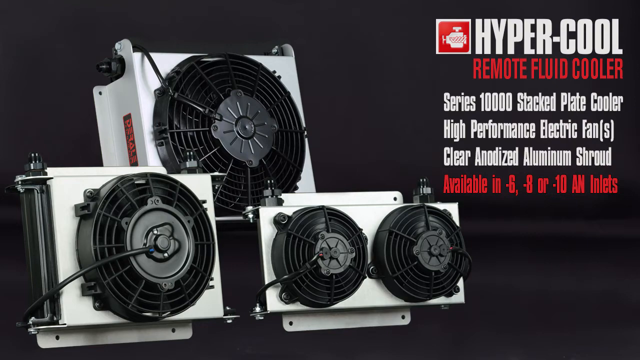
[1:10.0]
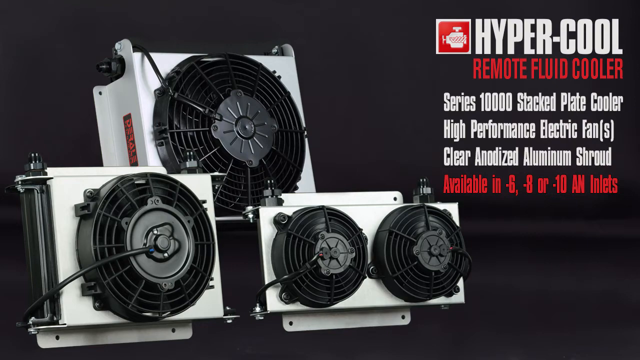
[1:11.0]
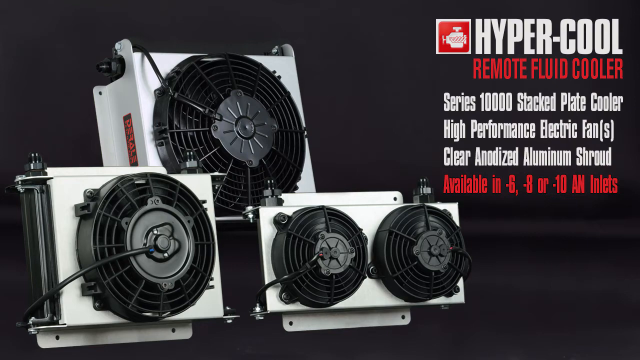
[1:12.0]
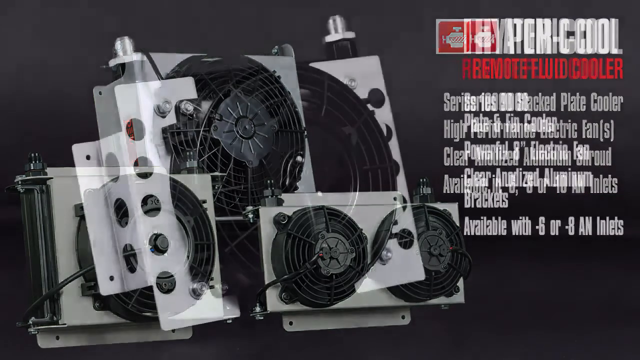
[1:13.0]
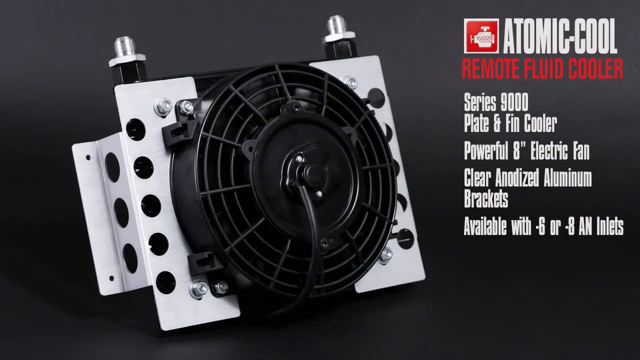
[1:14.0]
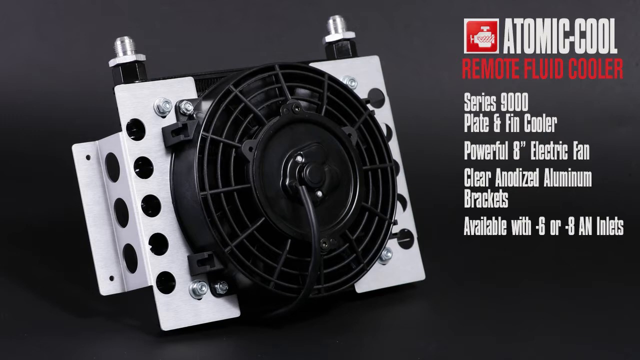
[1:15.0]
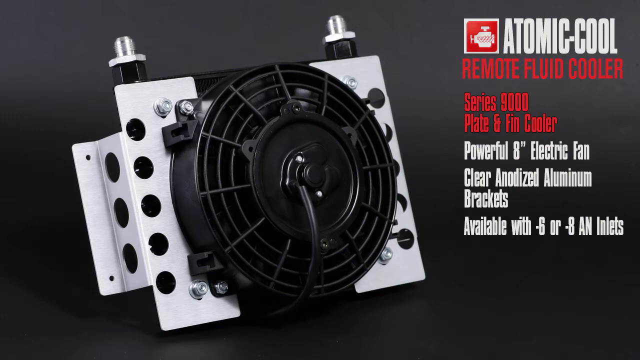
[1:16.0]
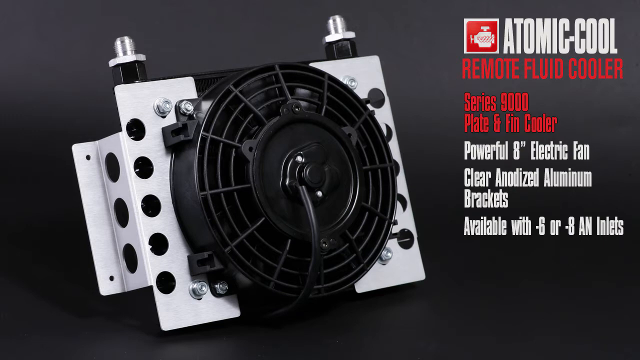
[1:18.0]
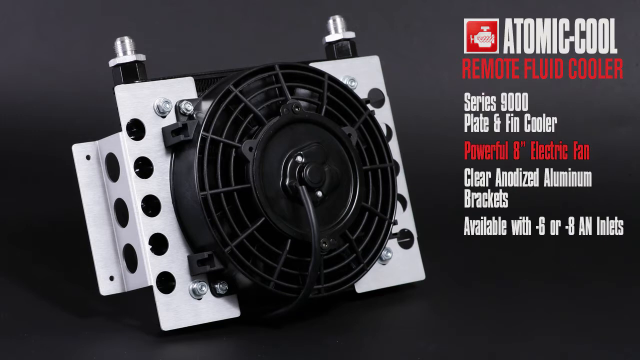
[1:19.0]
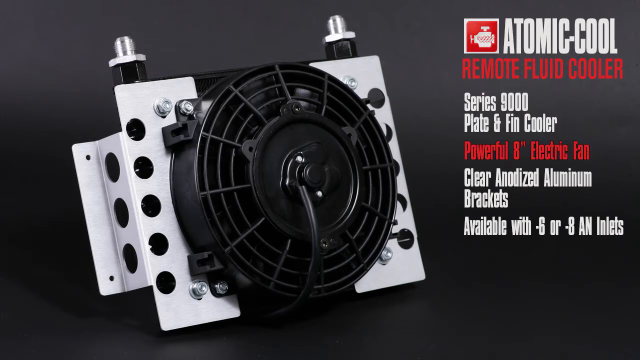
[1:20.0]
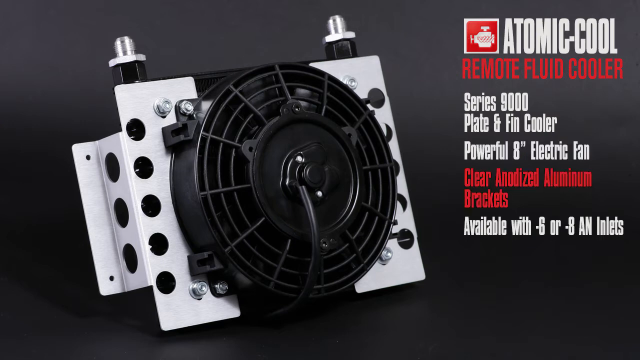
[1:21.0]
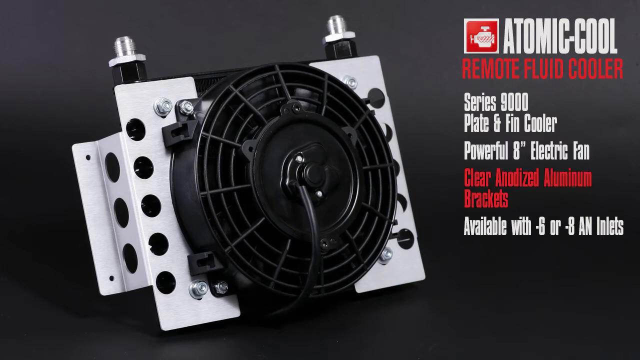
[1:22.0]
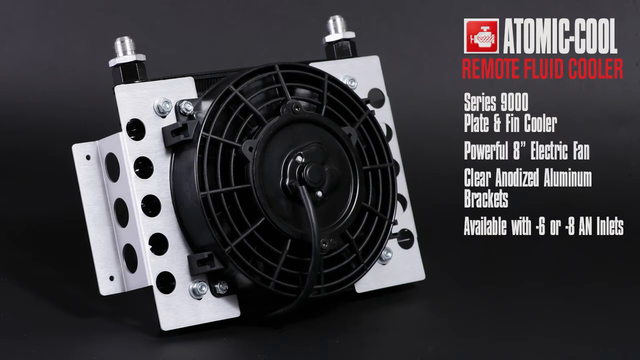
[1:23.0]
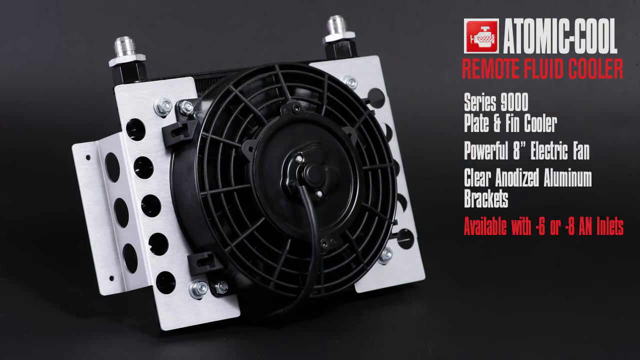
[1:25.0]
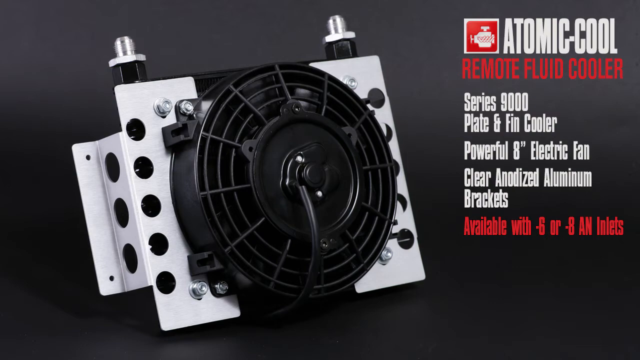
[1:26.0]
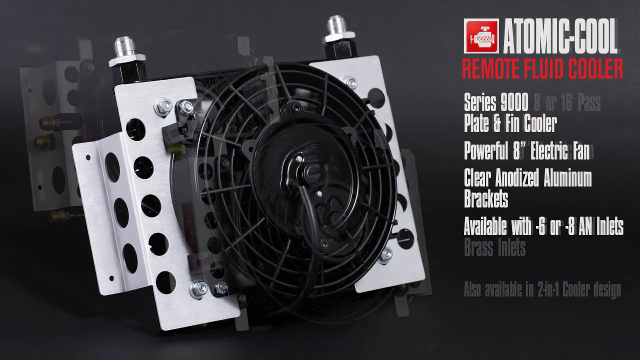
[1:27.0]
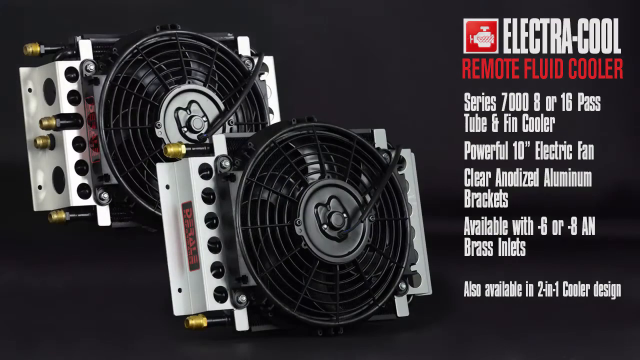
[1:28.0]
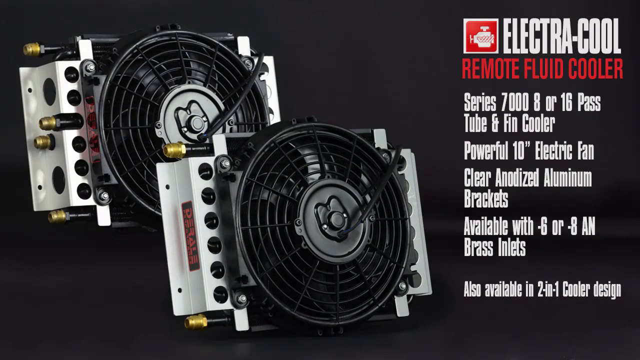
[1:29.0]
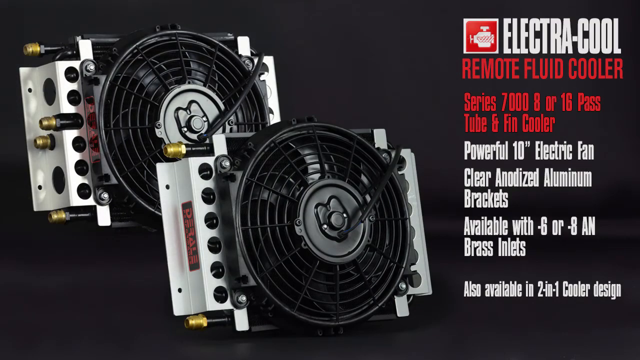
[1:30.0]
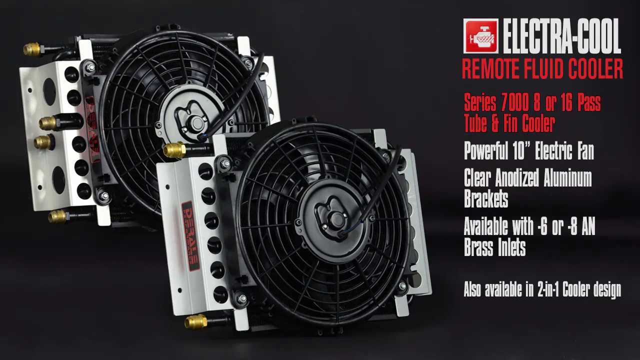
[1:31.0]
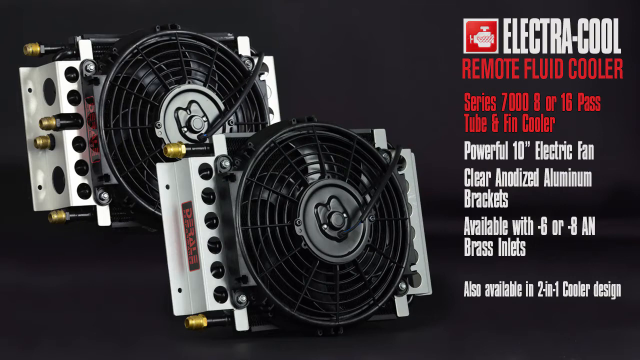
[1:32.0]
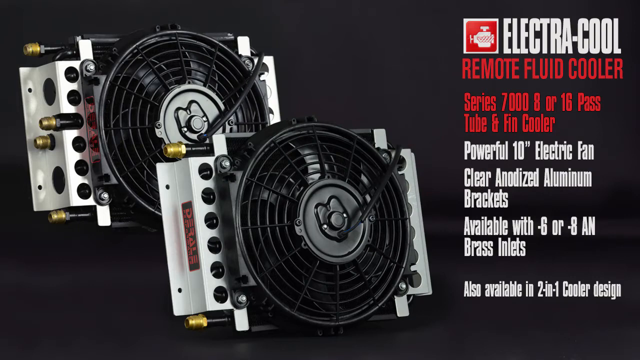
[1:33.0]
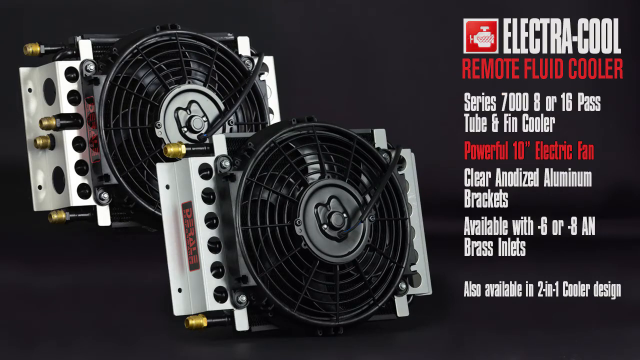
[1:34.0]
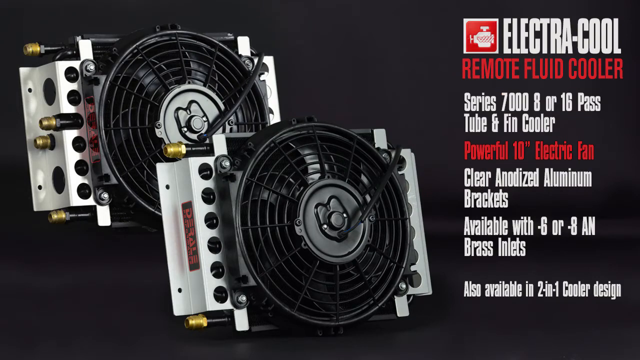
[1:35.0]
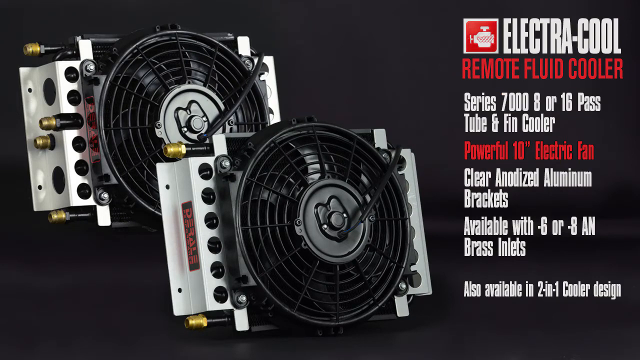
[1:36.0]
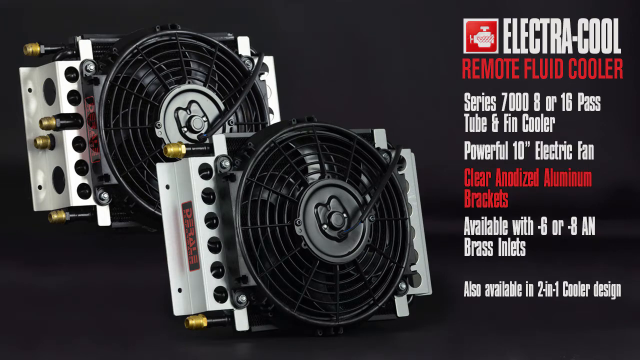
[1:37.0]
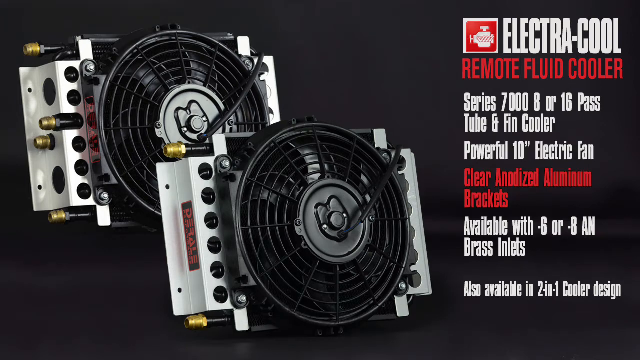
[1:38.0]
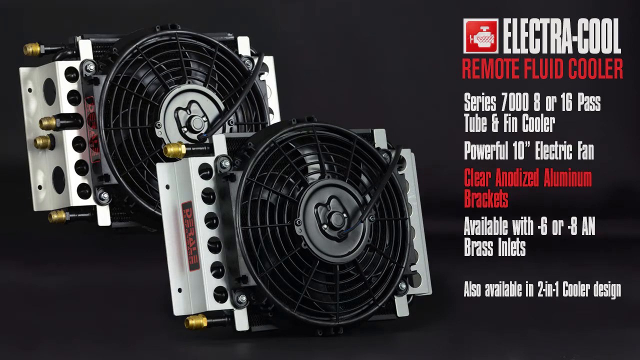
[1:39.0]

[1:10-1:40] The Hypercool remote fluid cooler is shown with the text "series 1000 stack plate cooler, high performance electric fans, clear anodized aluminum shroud, available in minus 6, minus 8 and minus 10 inlets", along with three images of distinct coolers against a black background. The ad then shows one of the coolers, the "series 9000", a "plate and fin cooler with powerful electric fan", "clear anodized aluminum brackets, available with minus 6 or minus 8 AN inlets". Next comes a remote fluid cooler, "series 7000, 8 or 16 pass tube and fin cooler, with powerful 10 inches electric fan, clear anodized aluminum brackets, available with minus 6 or minus 8 AN brass inlets", and text showing it also comes in a "2 by 1 cooler design".